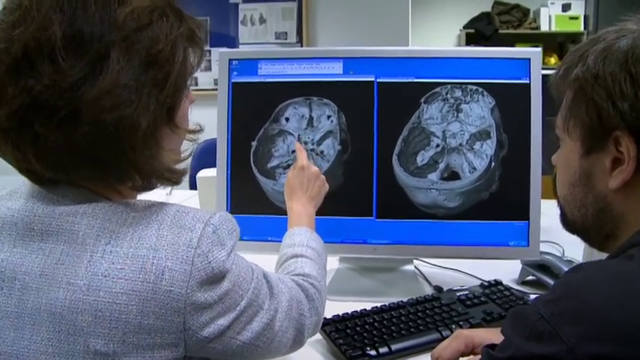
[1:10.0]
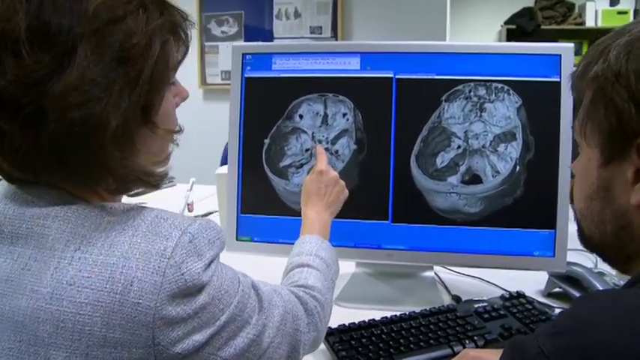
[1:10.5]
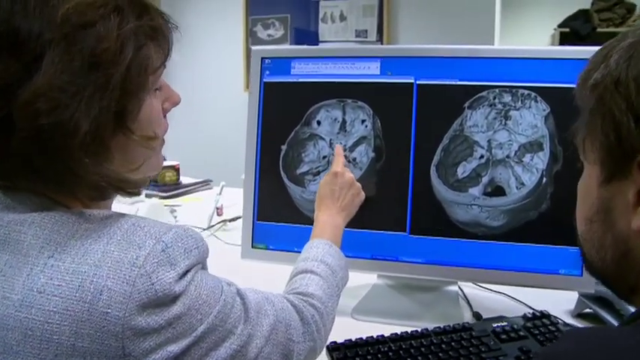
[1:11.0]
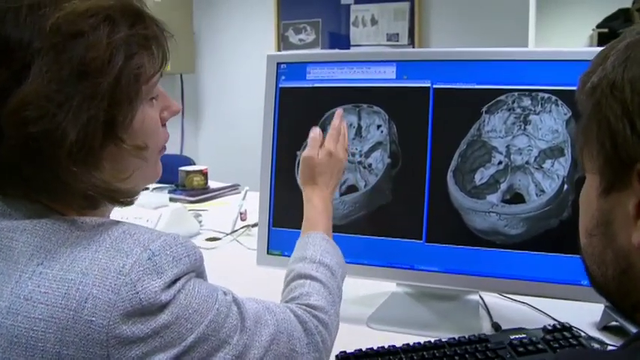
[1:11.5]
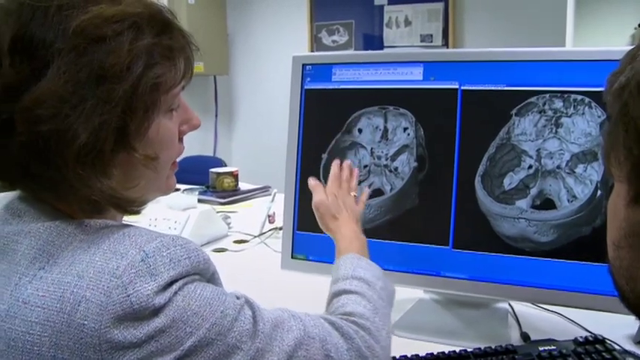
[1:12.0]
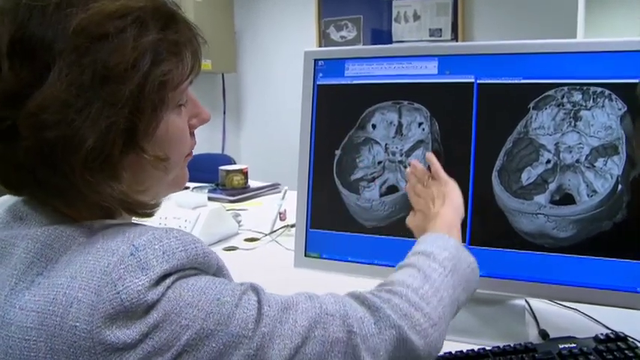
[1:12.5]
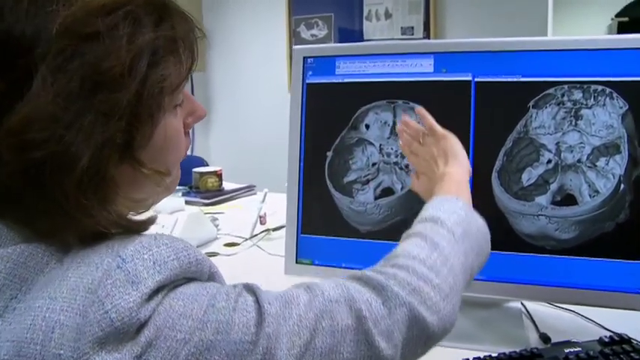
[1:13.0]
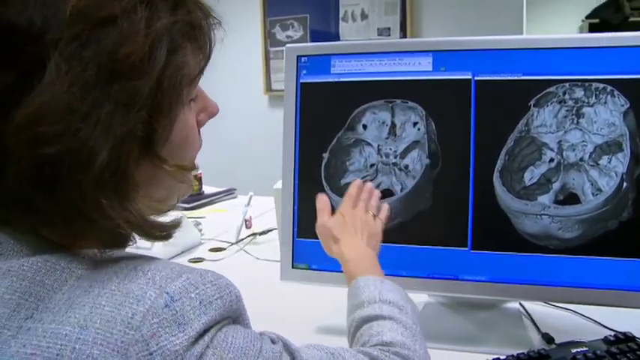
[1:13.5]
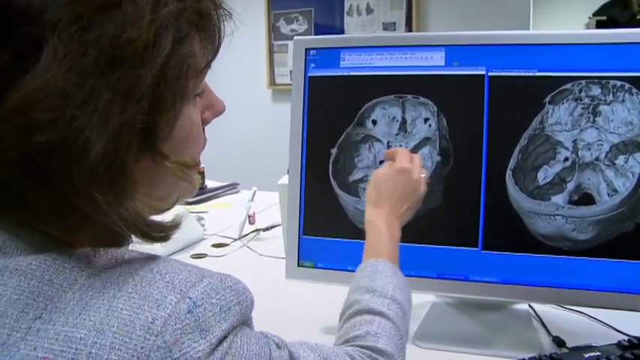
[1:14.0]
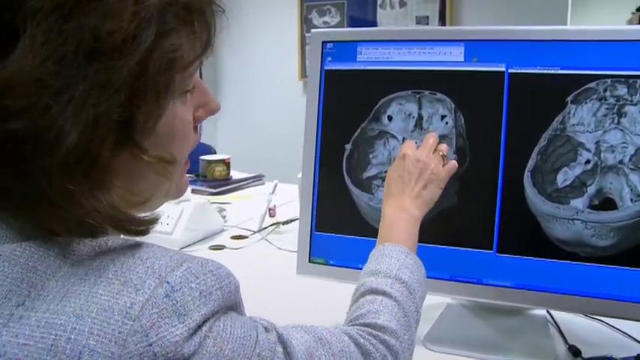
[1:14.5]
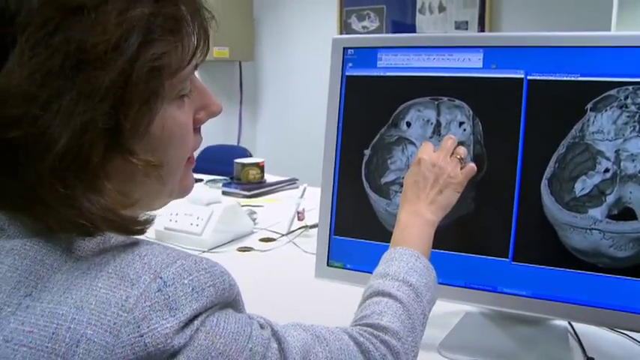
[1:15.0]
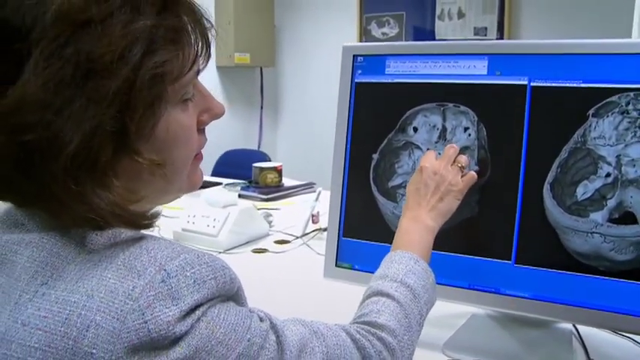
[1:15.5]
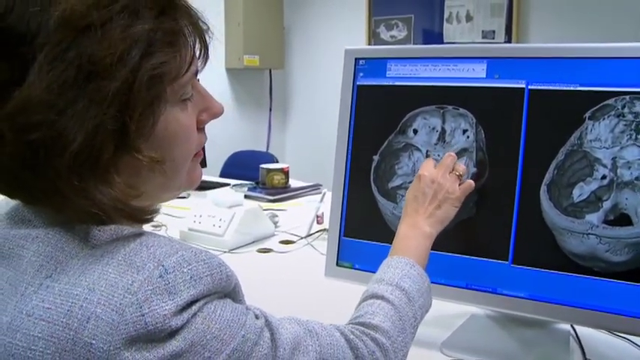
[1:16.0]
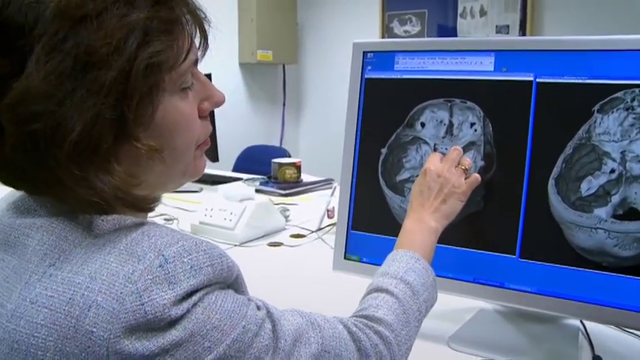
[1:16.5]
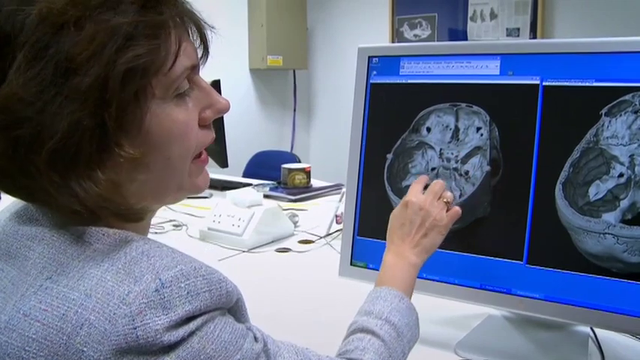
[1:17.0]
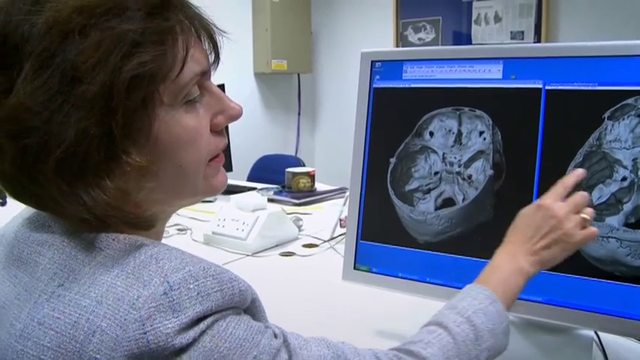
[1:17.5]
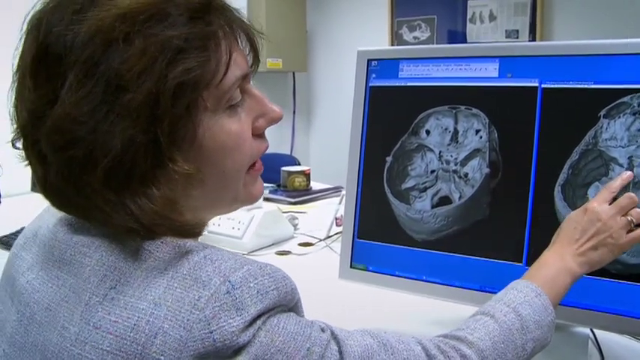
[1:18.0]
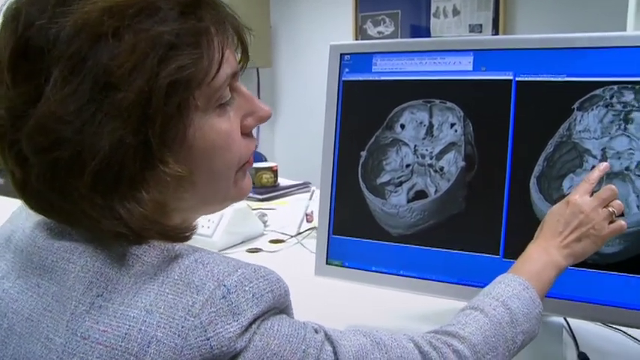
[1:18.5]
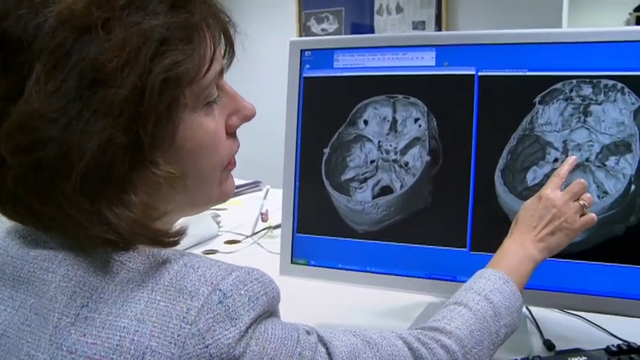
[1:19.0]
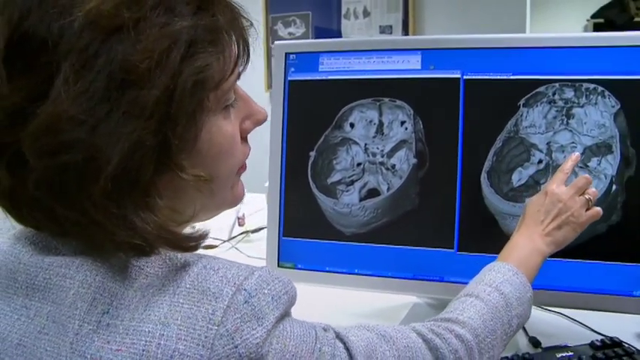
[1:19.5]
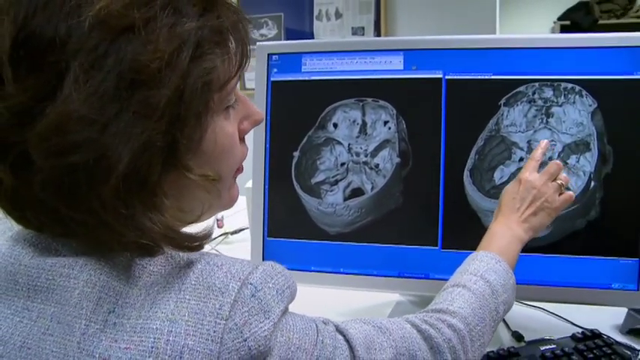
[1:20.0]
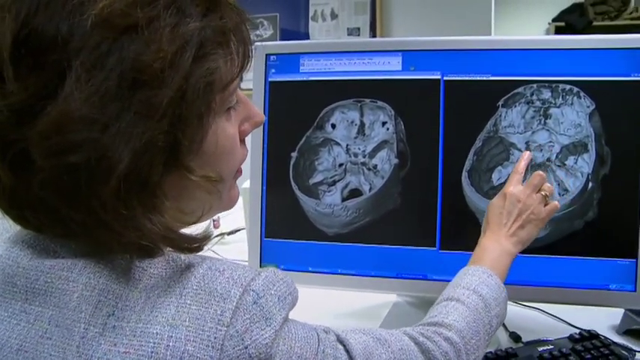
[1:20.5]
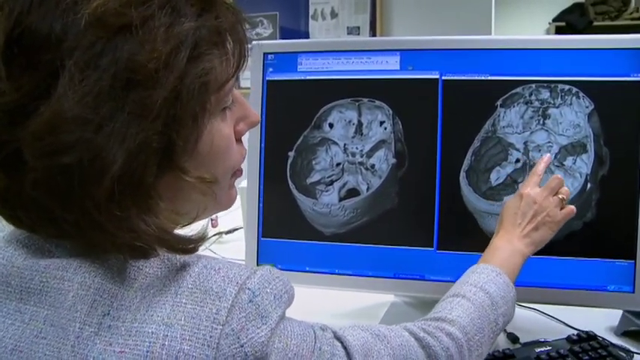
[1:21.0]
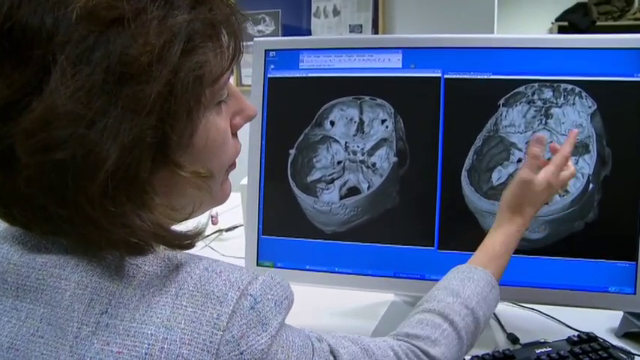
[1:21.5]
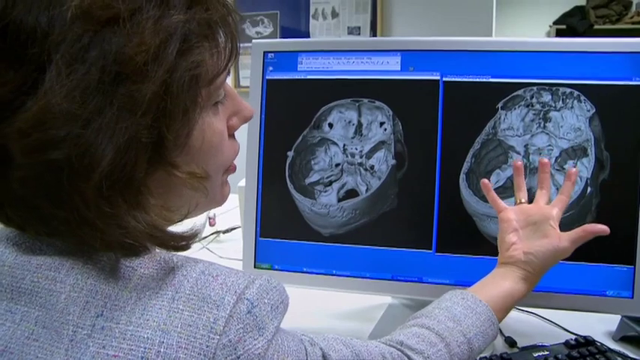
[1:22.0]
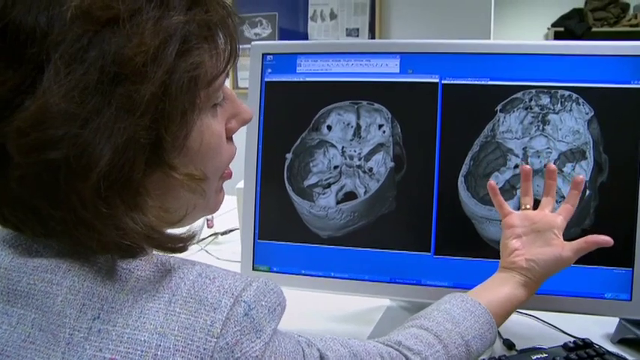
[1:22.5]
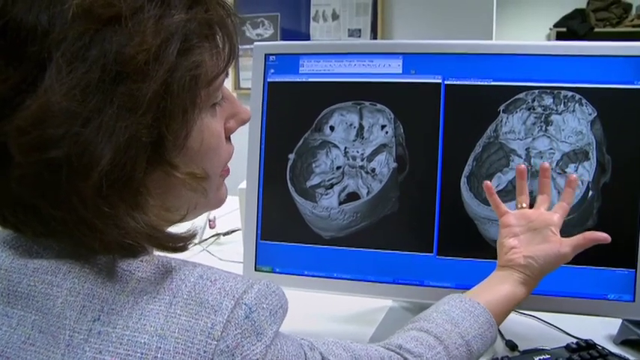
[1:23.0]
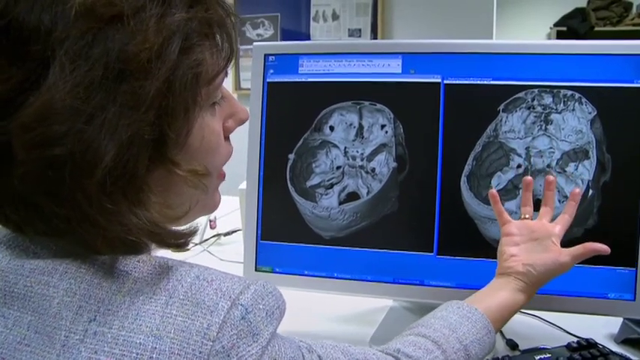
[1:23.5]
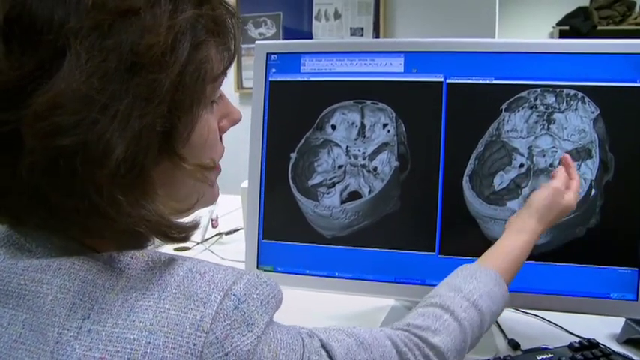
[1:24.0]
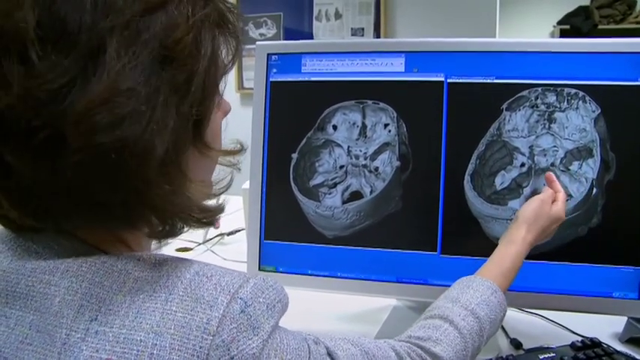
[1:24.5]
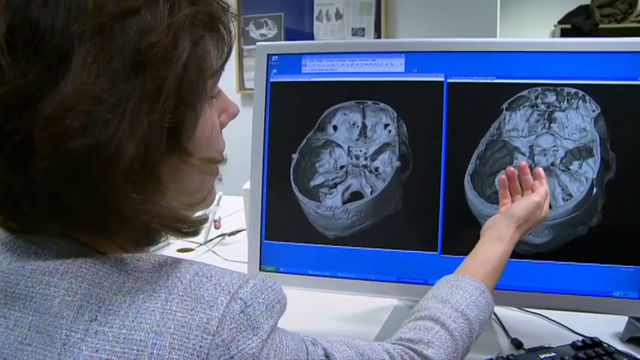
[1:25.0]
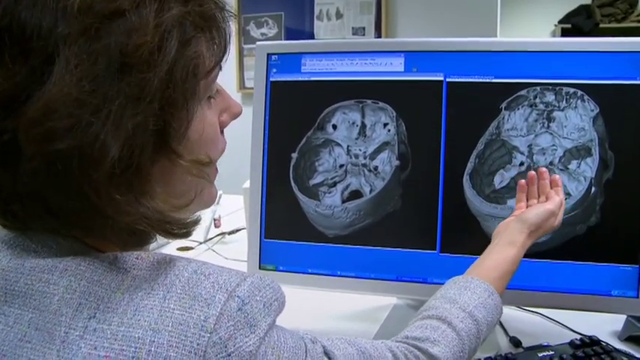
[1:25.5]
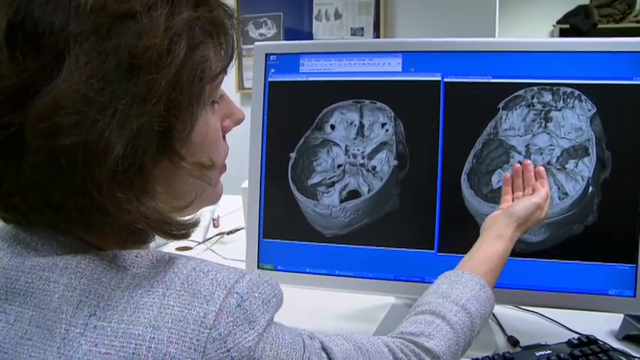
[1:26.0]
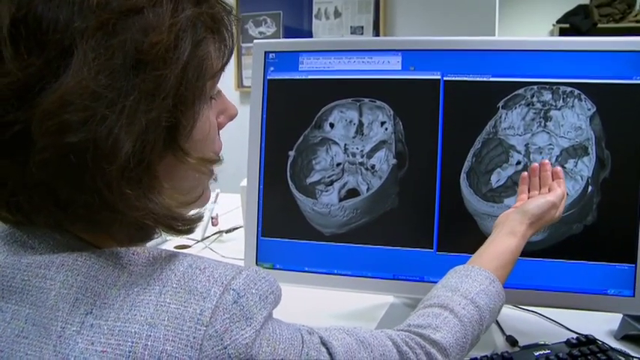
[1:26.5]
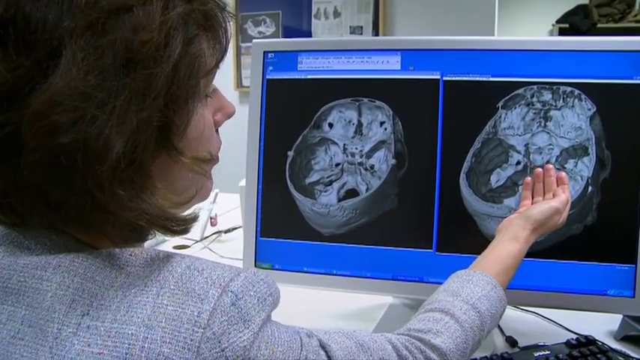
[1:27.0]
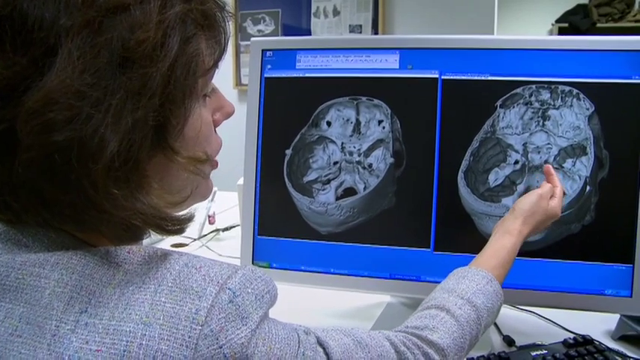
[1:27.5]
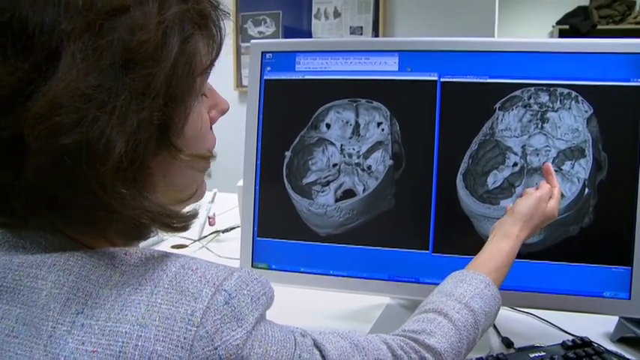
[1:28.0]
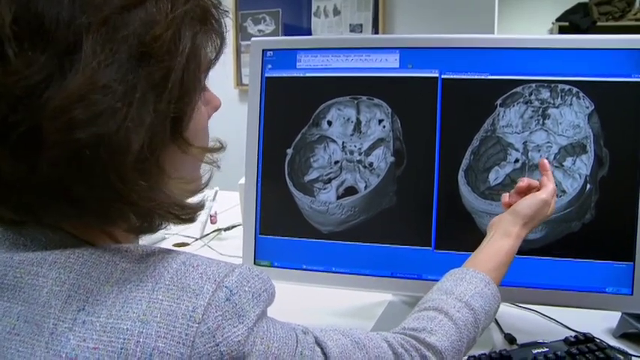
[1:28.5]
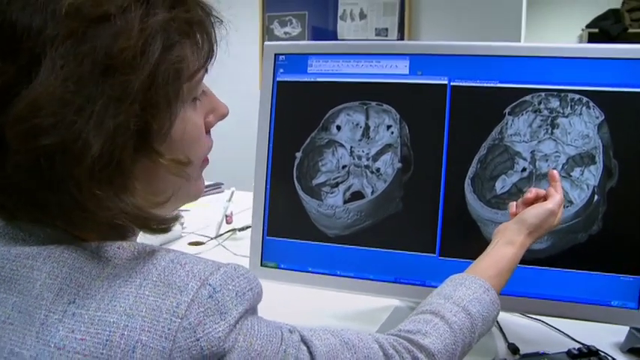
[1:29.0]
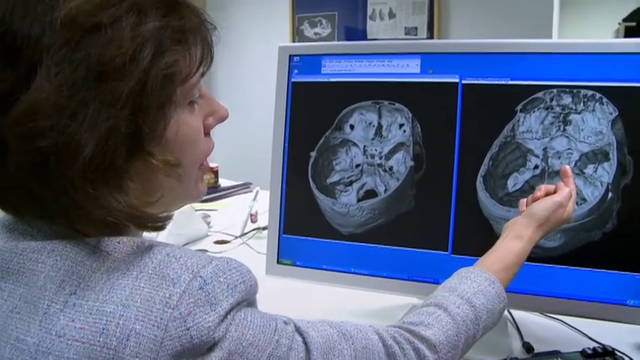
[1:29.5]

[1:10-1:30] The woman continues to explain the image on the left side. She makes a V-shaped swooping motion with her right hand from left to right, then points to the center of the image. She moves to the right side of the image and points to something in its middle. She holds up her right hand with the palm facing the camera and her fingers spread out, showing a gold ring on her ring finger. She then puts her hands together, points to the center of the image, and points to something in the middle of the image with her fingers spread out. Both of them look at the images the entire time.